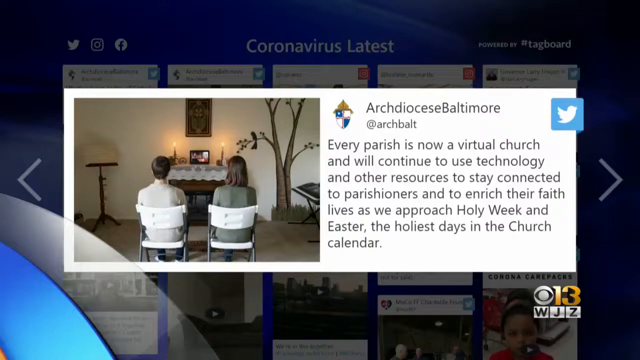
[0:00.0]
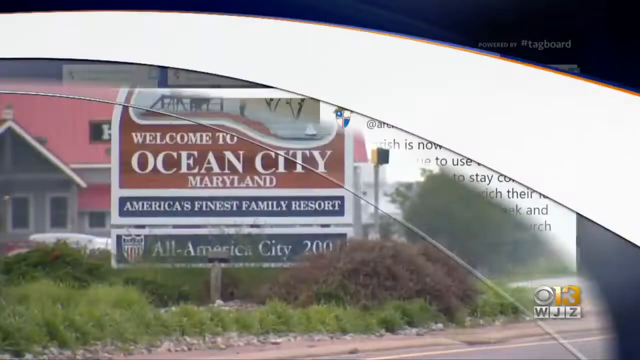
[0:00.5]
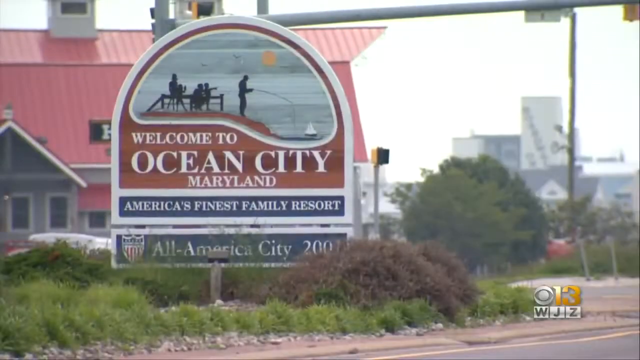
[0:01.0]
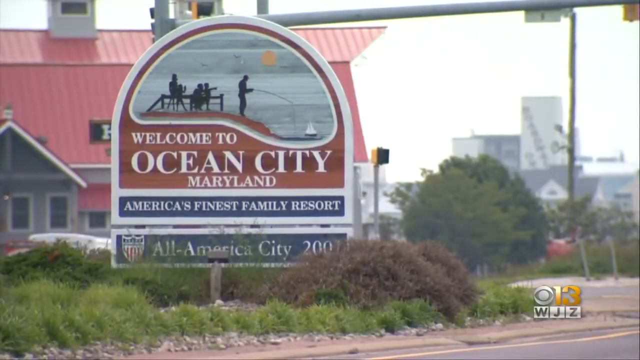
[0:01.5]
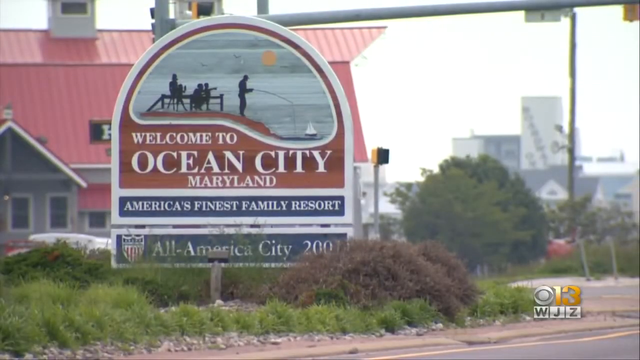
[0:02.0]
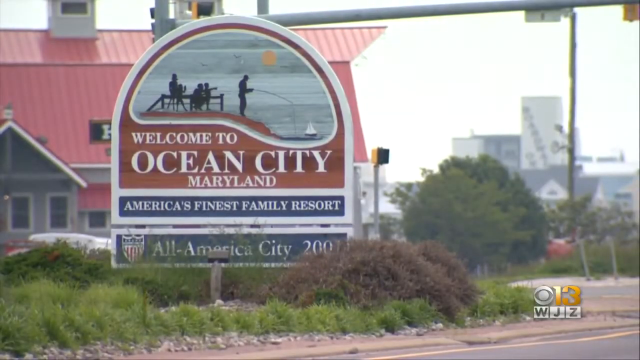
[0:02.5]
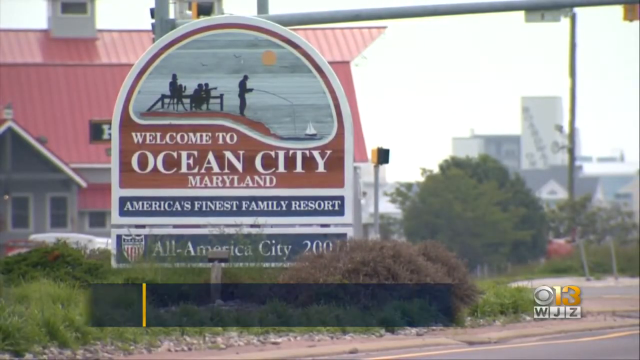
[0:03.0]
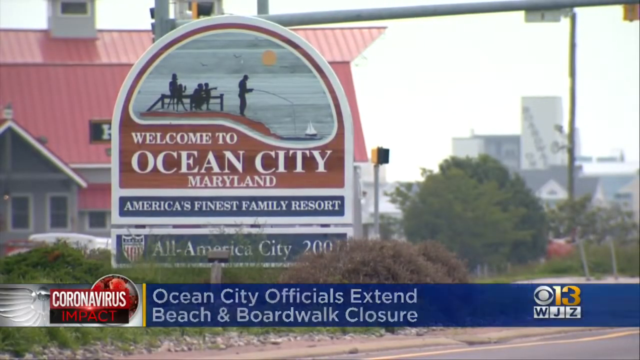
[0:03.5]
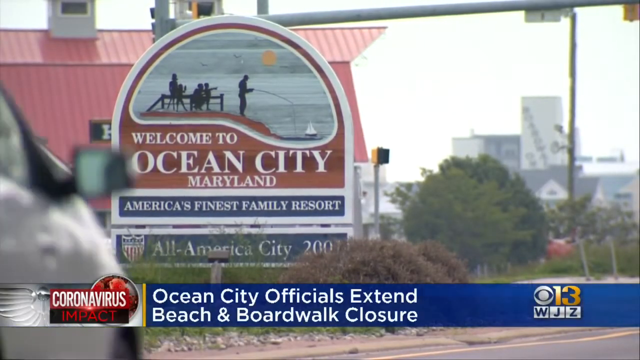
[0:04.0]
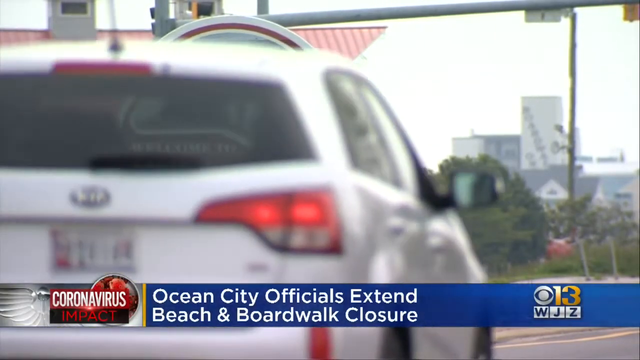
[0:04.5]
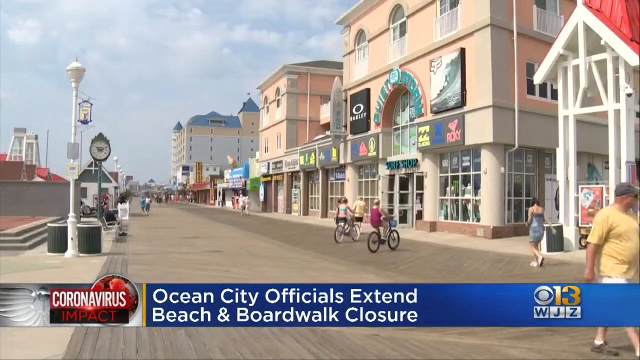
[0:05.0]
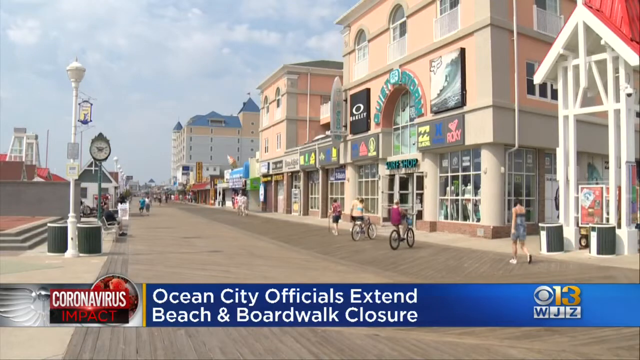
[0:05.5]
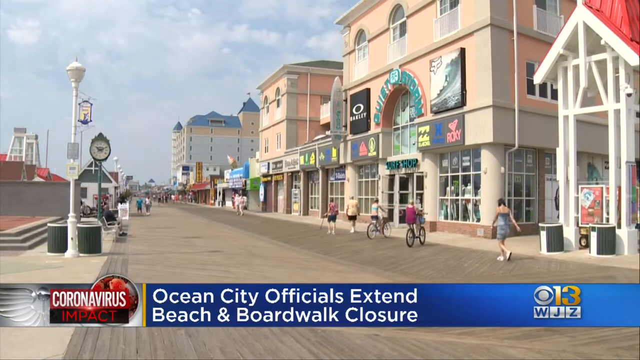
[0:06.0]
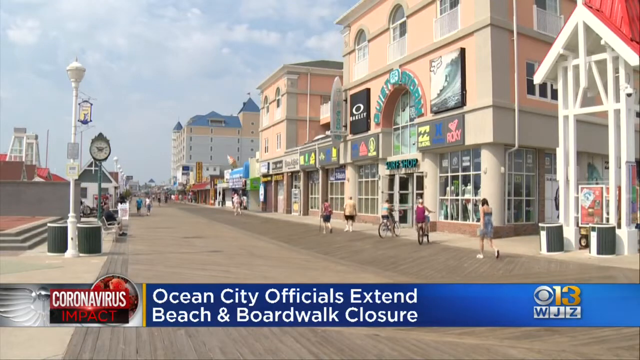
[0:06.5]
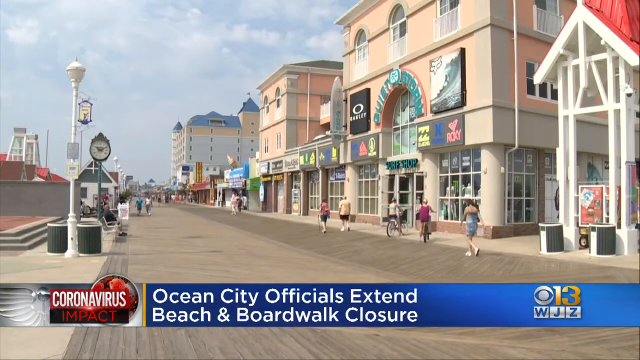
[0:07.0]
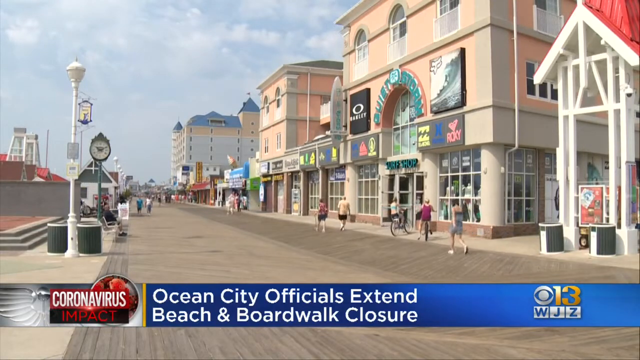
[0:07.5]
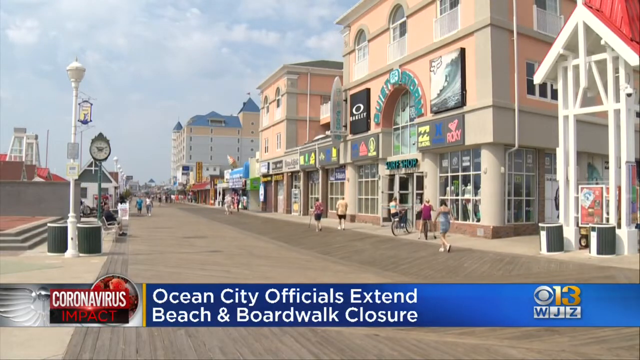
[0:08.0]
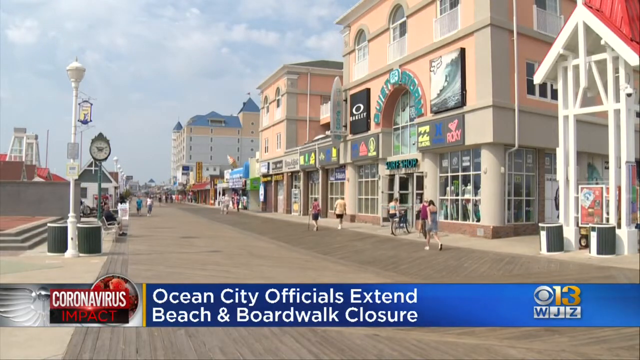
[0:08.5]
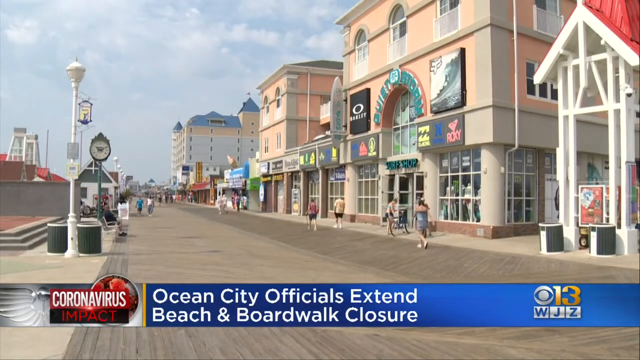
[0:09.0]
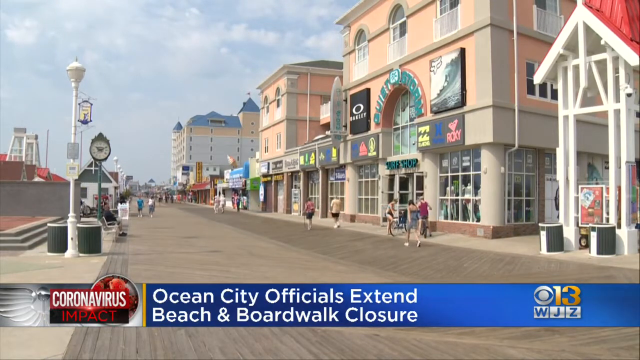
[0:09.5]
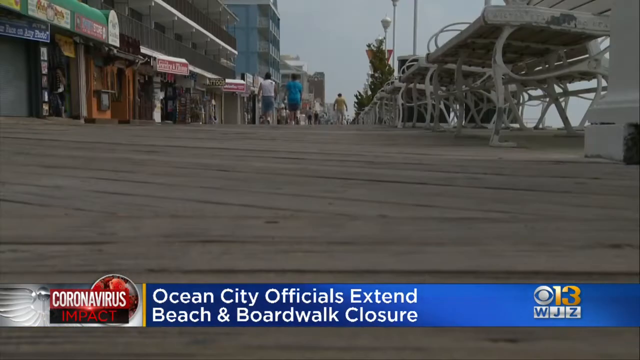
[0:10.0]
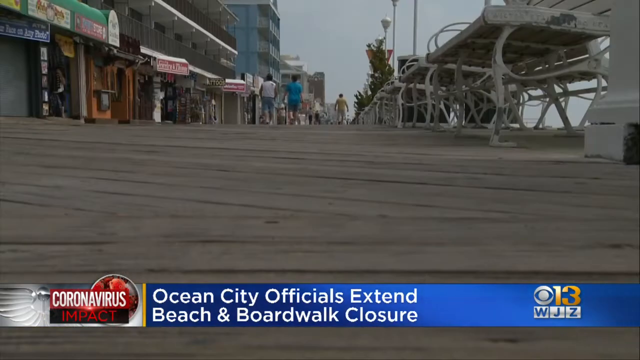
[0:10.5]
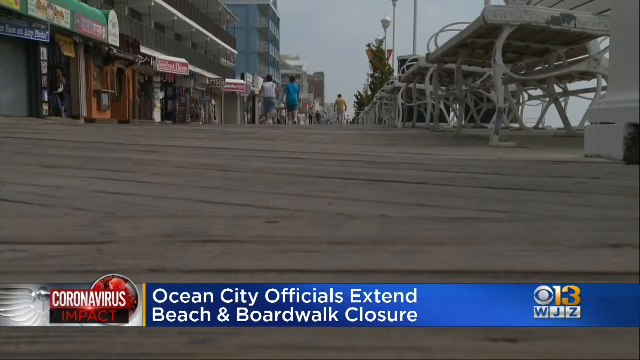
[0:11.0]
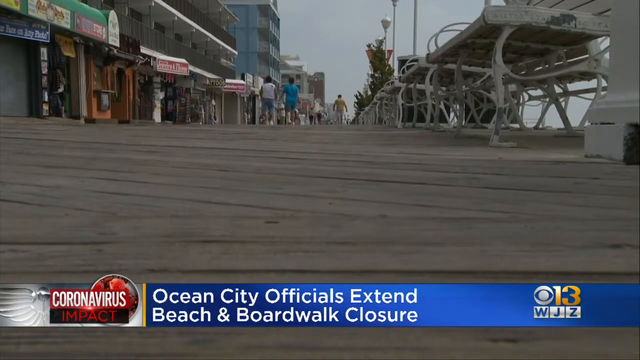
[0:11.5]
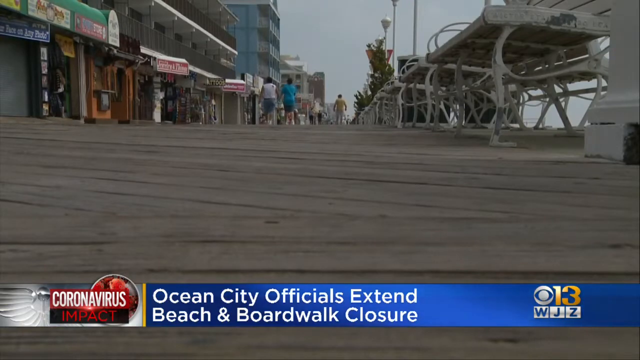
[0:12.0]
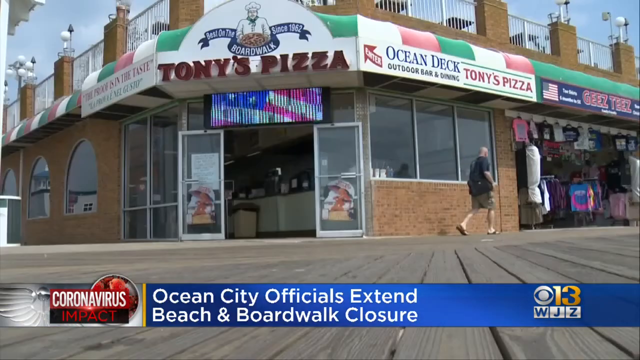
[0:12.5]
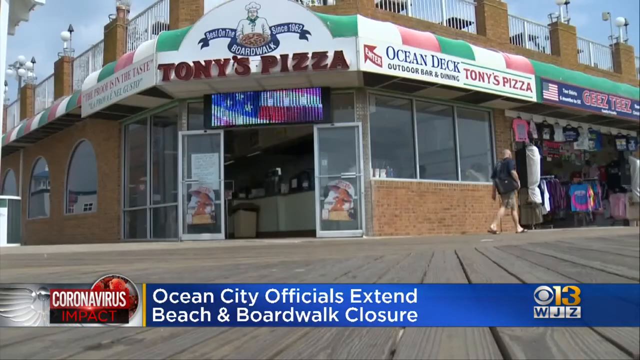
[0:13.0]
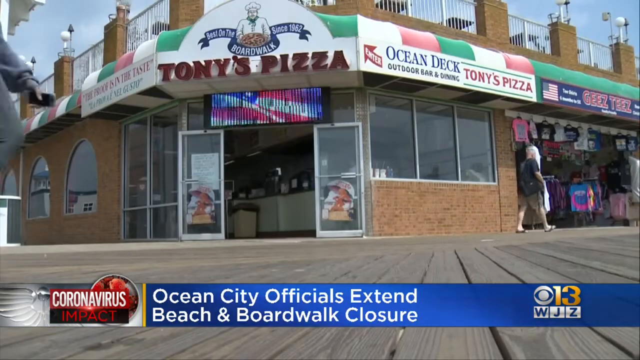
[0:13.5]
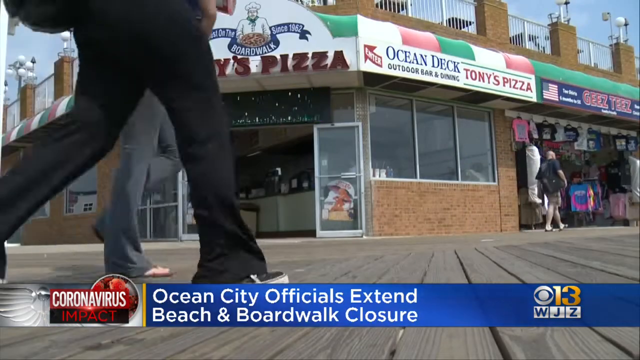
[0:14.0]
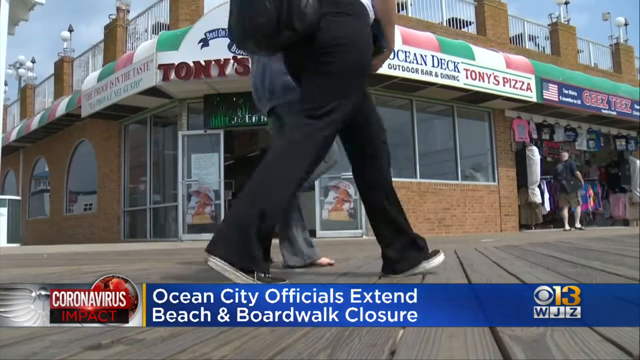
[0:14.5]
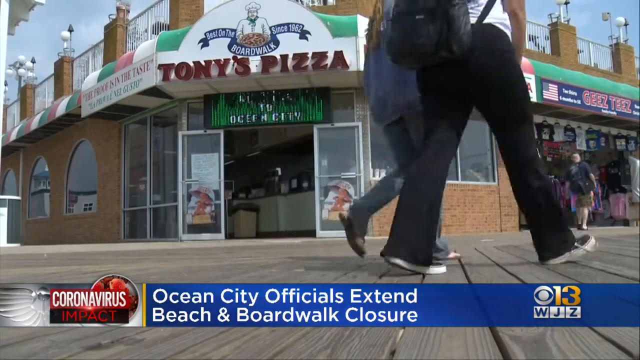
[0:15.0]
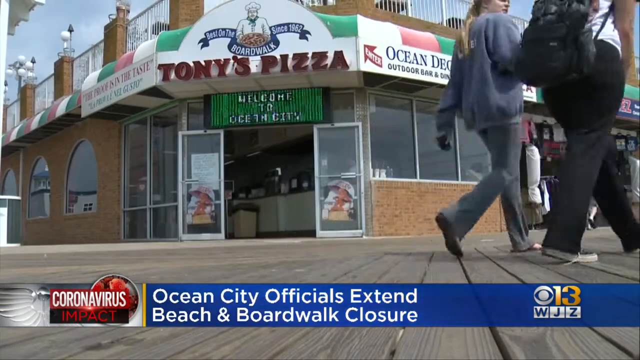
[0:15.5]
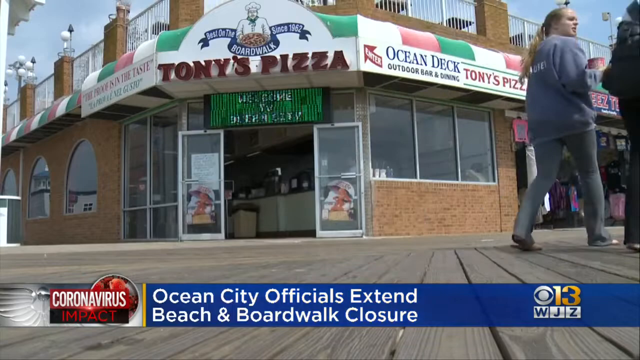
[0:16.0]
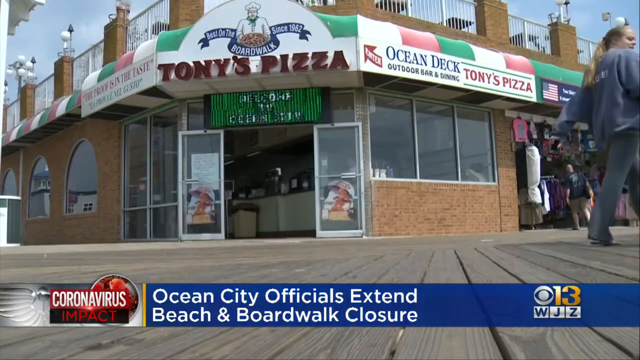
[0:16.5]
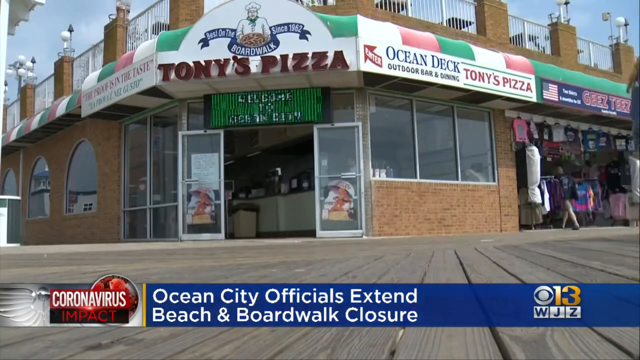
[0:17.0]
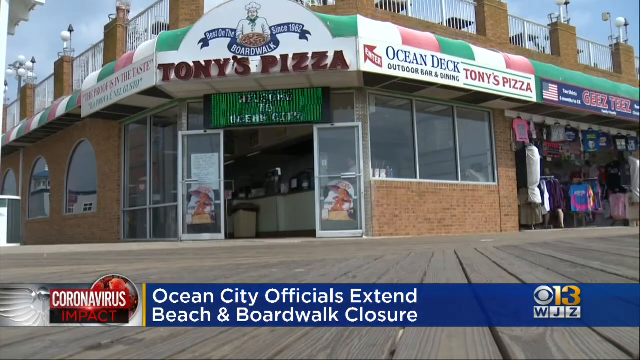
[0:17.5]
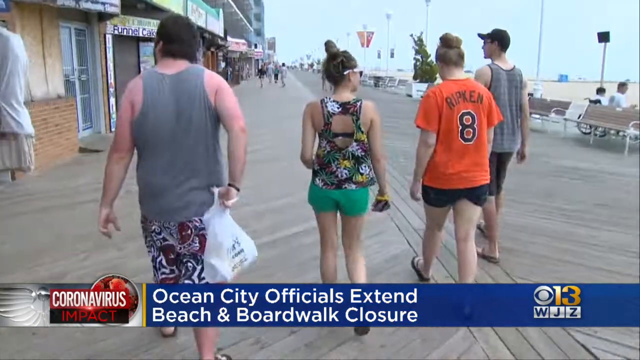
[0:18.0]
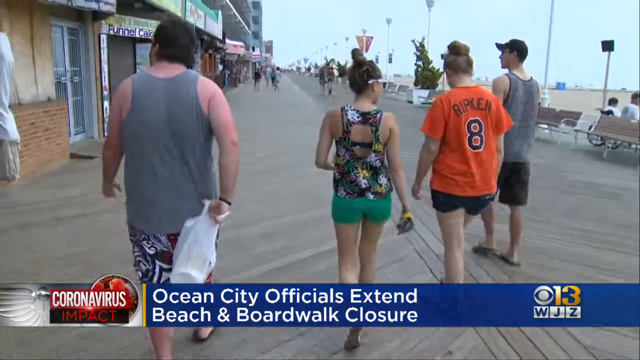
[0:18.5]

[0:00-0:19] A tweet from the archdiocese of Baltimore is shown, reading: "Every parish is now a virtual church and will continue to use technology and other resources to stay connected to parishioners and enrich their faith lives as we approach Holy Week and Easter and the holiest days in the church calendar." Behind the tweet is a picture of two people watching TV, apparently at home, with two lit candles on top of the TV, or possibly an altar made out of a cloth with a laptop on top. Also behind the tweet is text that says "coronavirus Latest." Next comes a sign that says "welcome to Ocean City, Maryland America's finest family resort all America City 2002"; it looks like a painted wooden sign. A banner on the bottom third reads "Ocean City officials extend beach and boardwalk closure." The broadcast is on Channel 13 and looks like Eyewitness News; WJZ and channel 13 can just barely be made out, and it is possibly CBS. The screen also says "coronavirus impact" while a scene of Ocean City along the boardwalk is shown, with lots of shops.